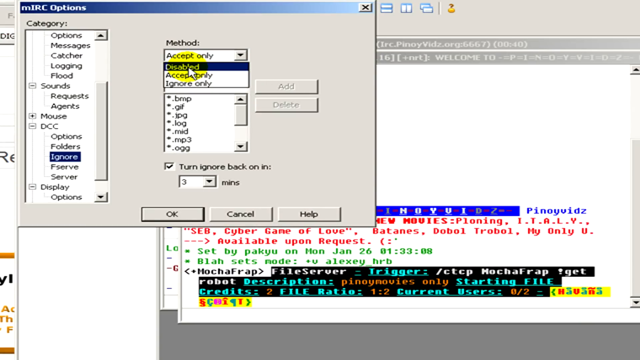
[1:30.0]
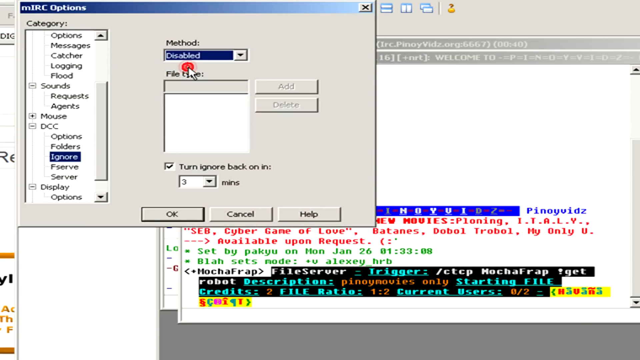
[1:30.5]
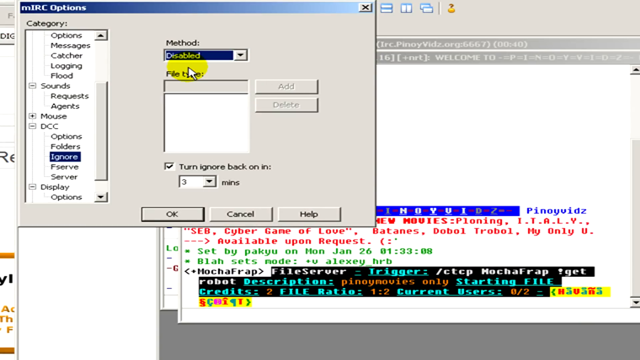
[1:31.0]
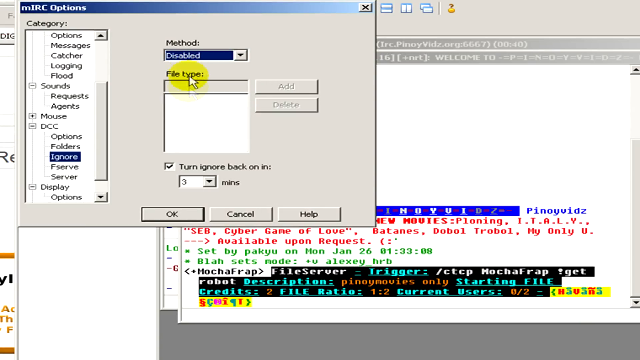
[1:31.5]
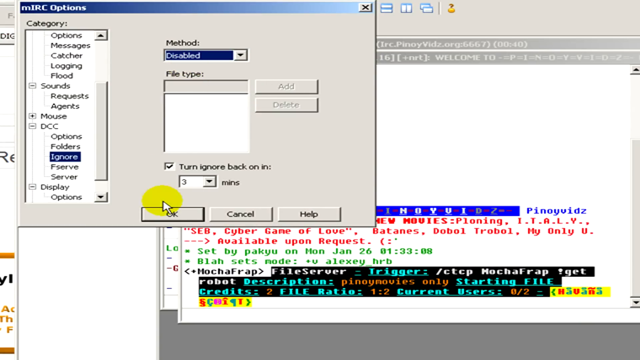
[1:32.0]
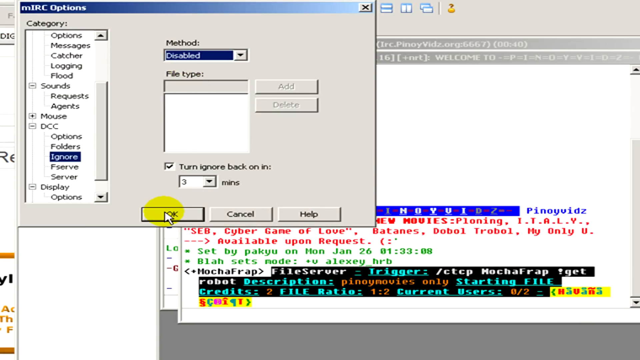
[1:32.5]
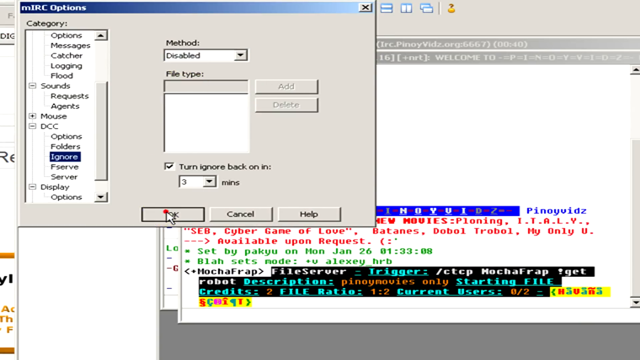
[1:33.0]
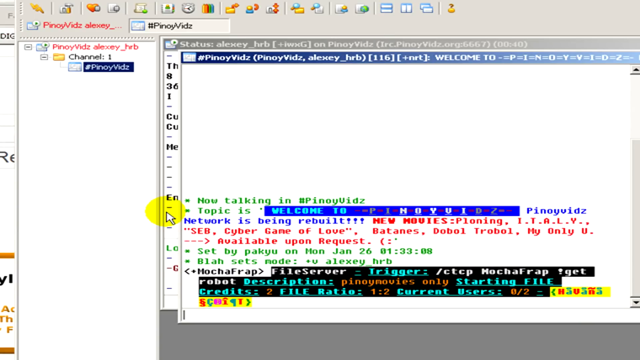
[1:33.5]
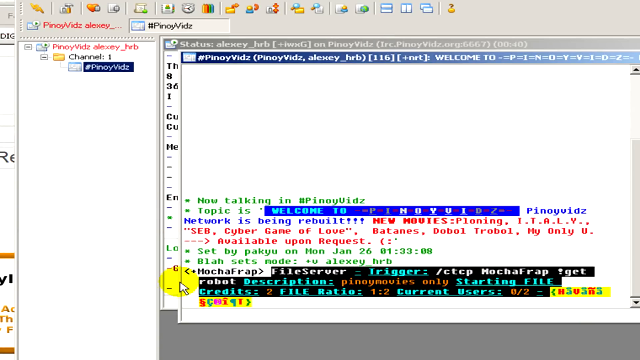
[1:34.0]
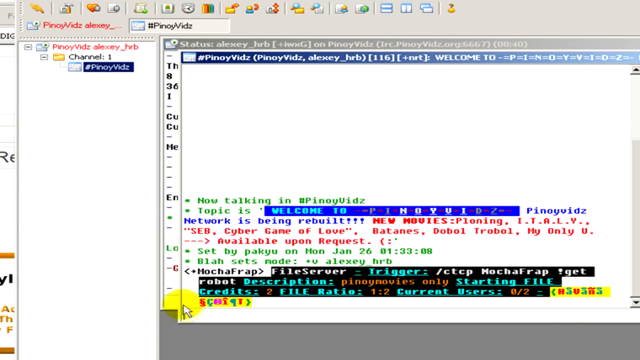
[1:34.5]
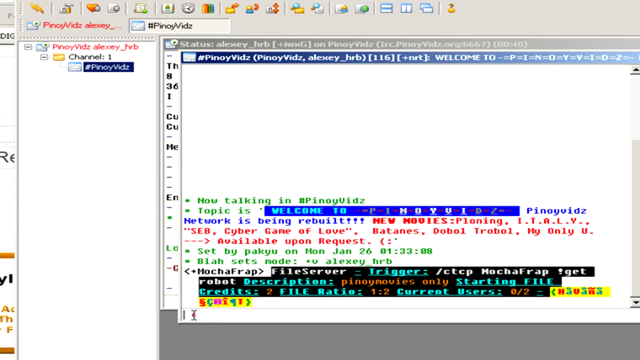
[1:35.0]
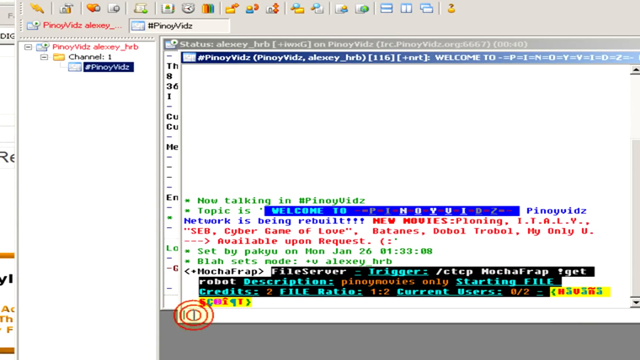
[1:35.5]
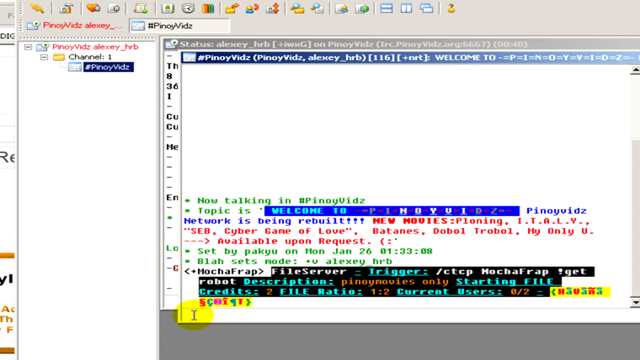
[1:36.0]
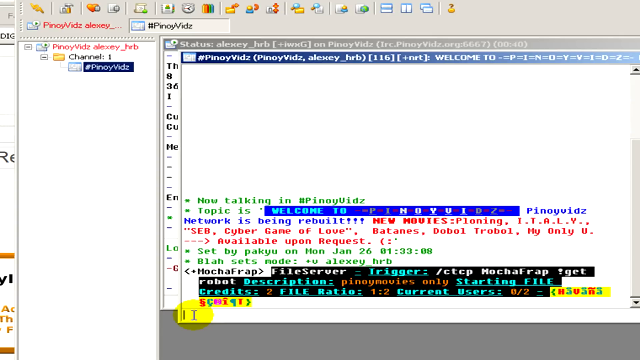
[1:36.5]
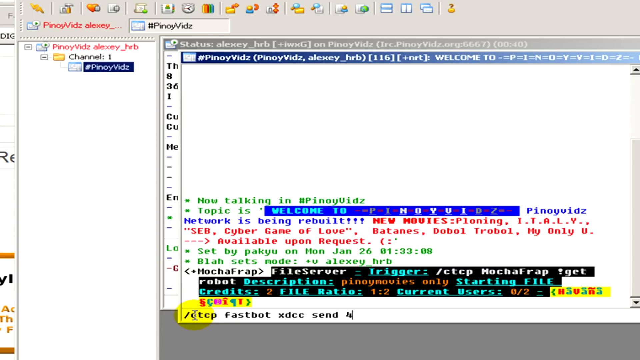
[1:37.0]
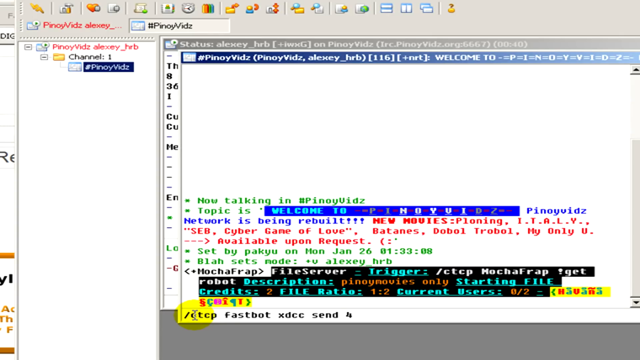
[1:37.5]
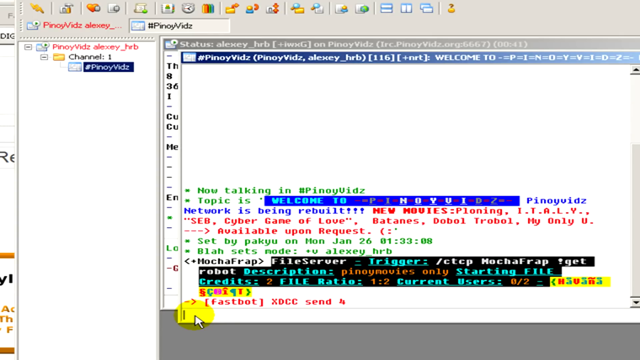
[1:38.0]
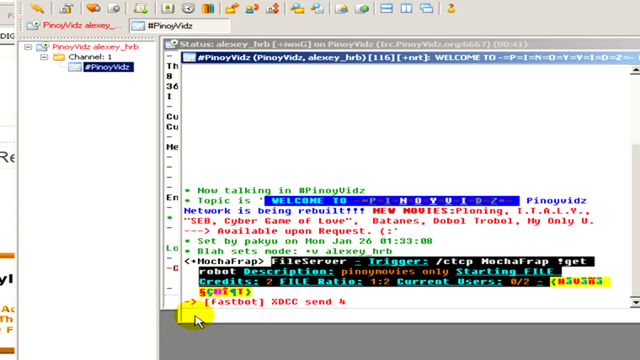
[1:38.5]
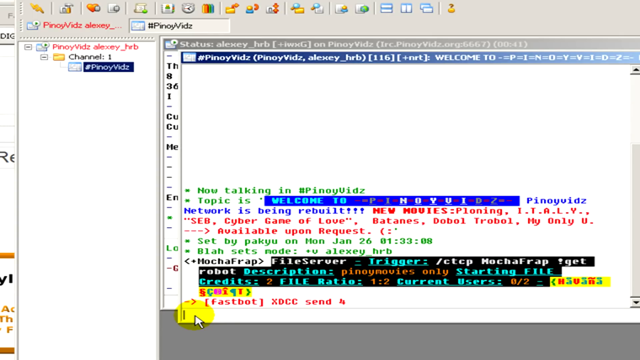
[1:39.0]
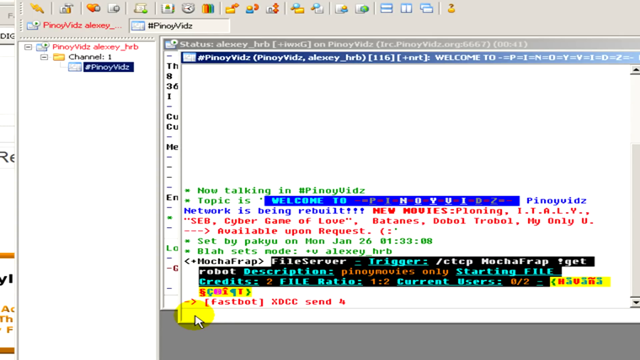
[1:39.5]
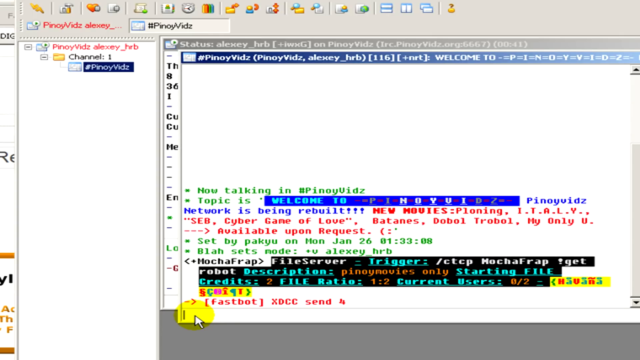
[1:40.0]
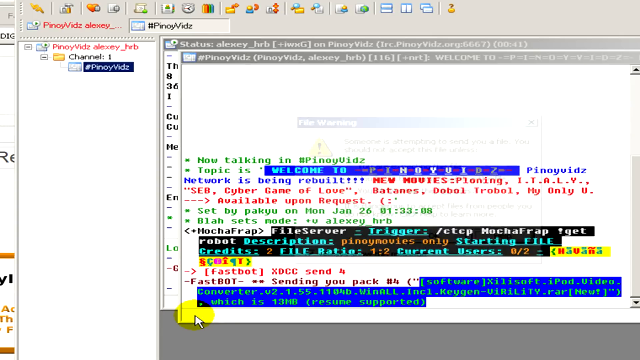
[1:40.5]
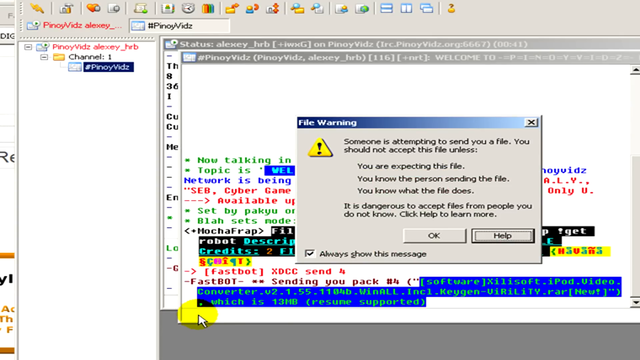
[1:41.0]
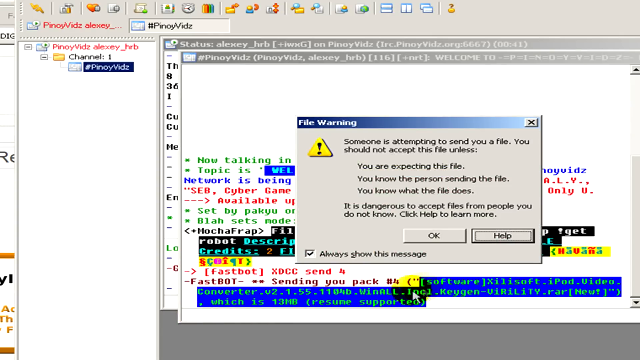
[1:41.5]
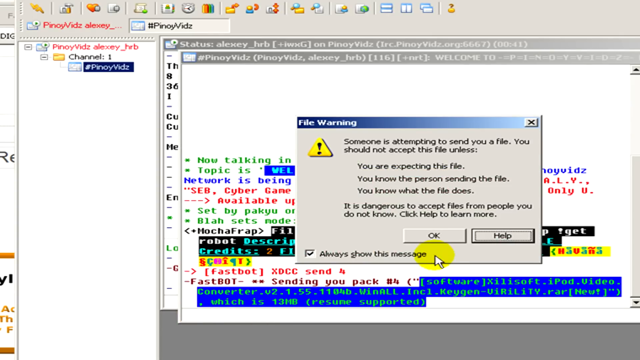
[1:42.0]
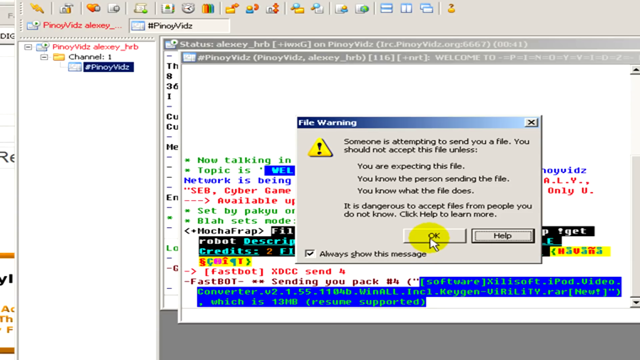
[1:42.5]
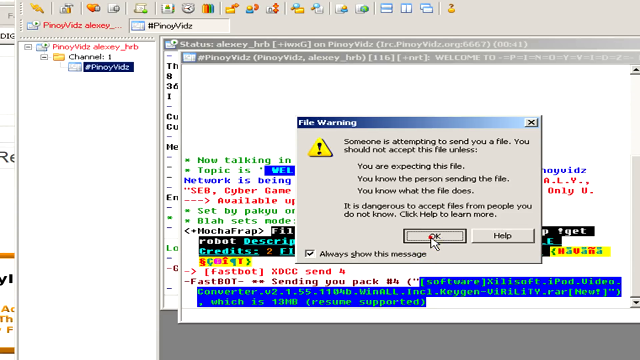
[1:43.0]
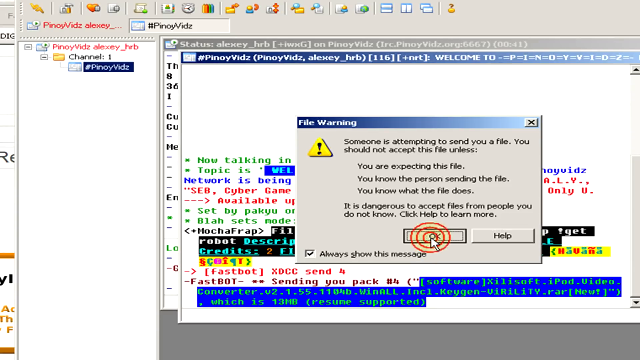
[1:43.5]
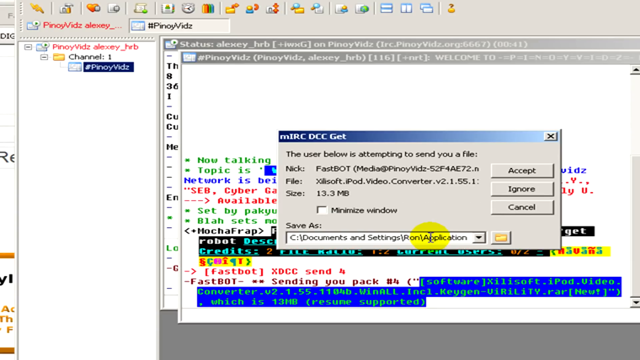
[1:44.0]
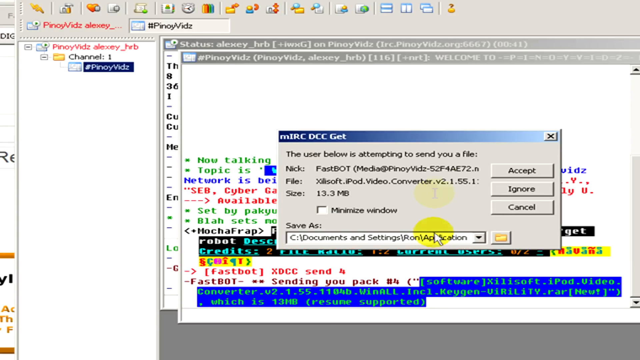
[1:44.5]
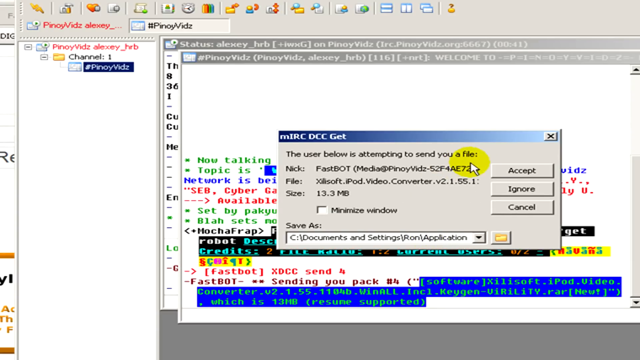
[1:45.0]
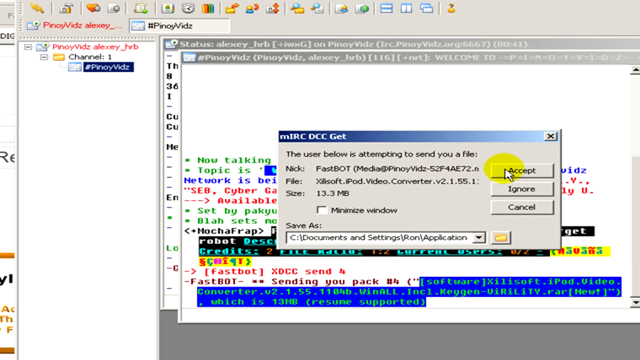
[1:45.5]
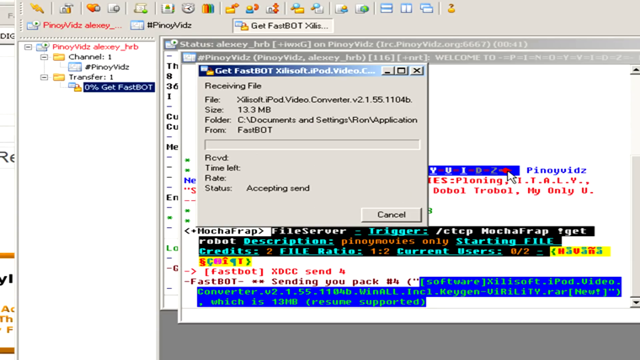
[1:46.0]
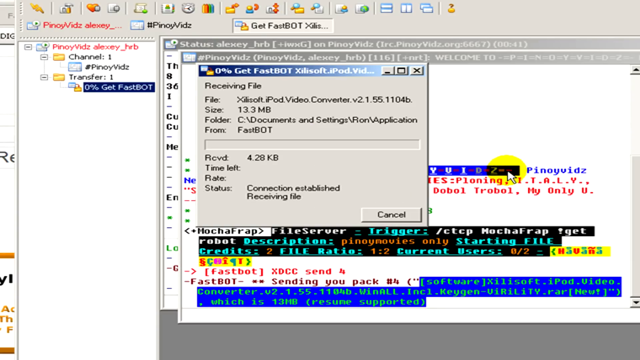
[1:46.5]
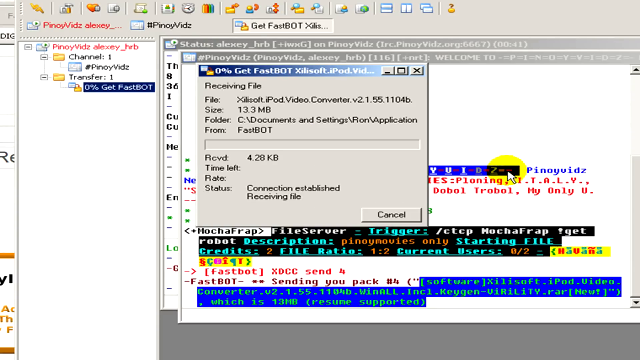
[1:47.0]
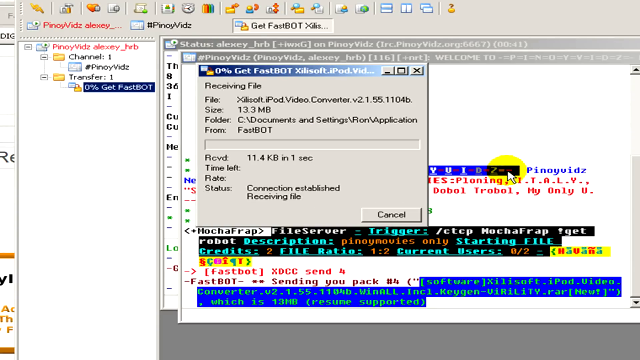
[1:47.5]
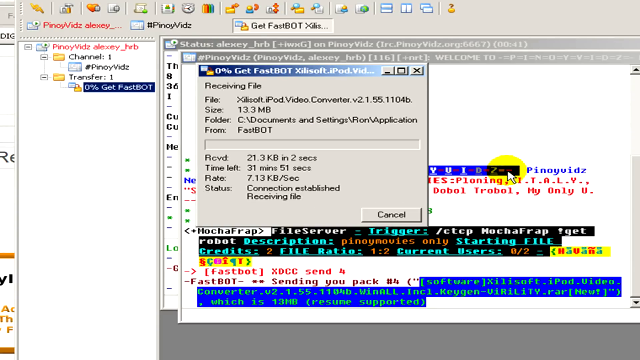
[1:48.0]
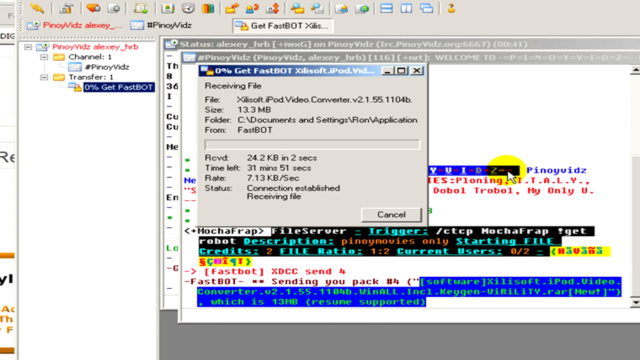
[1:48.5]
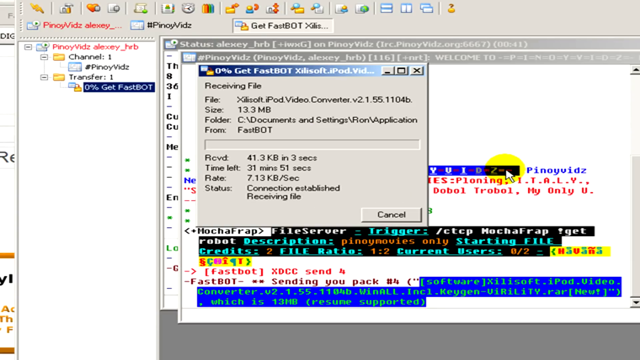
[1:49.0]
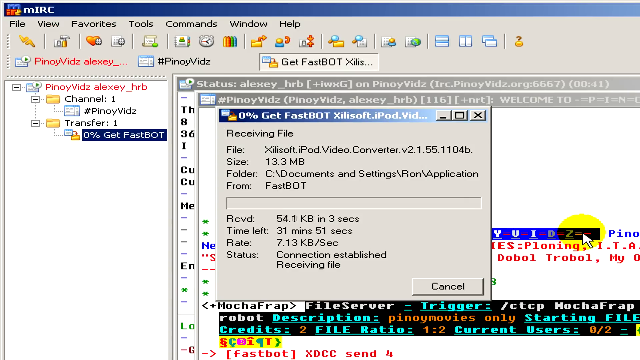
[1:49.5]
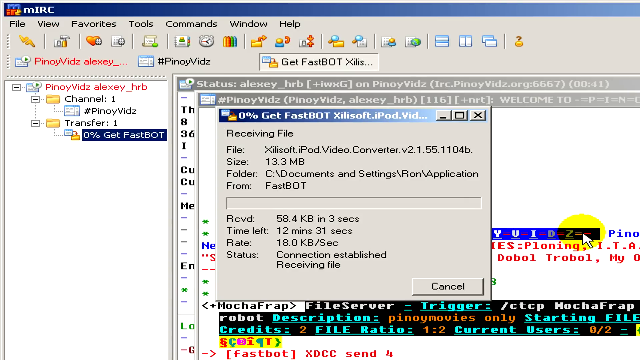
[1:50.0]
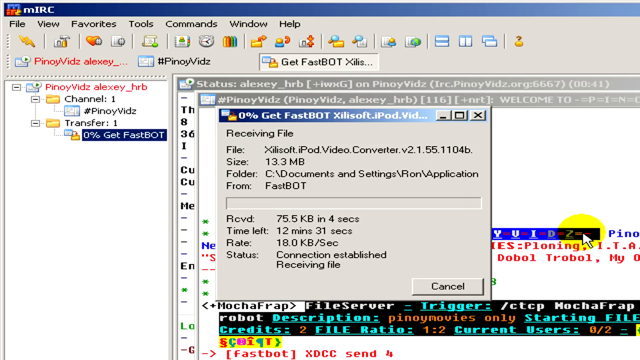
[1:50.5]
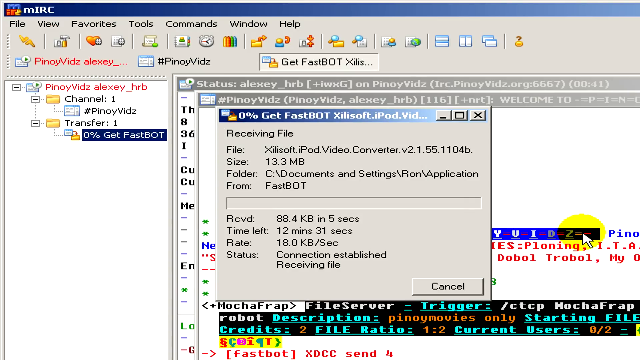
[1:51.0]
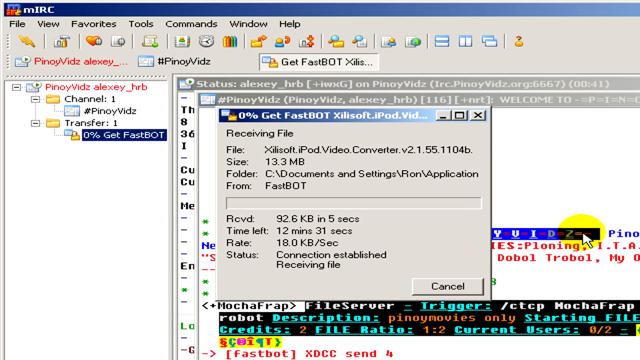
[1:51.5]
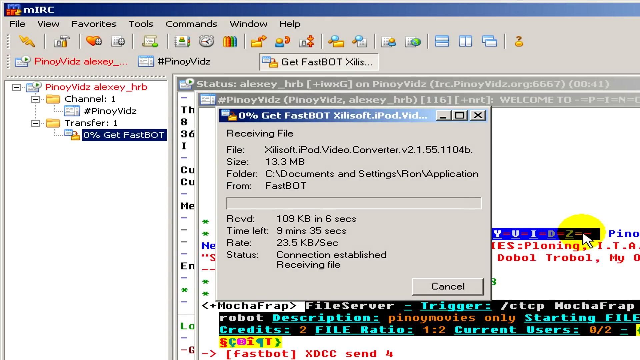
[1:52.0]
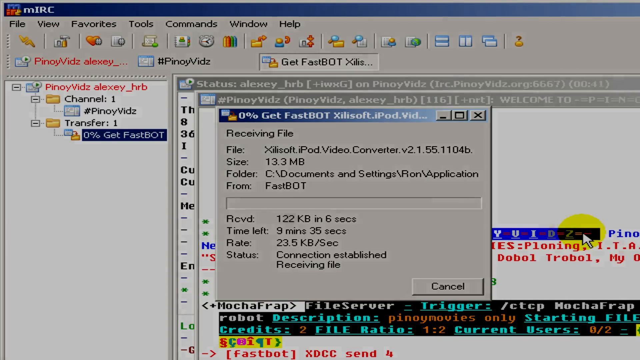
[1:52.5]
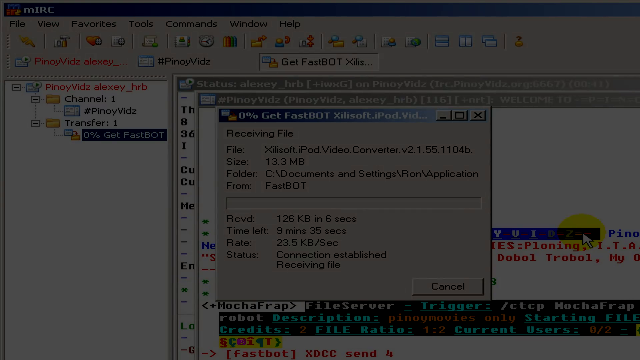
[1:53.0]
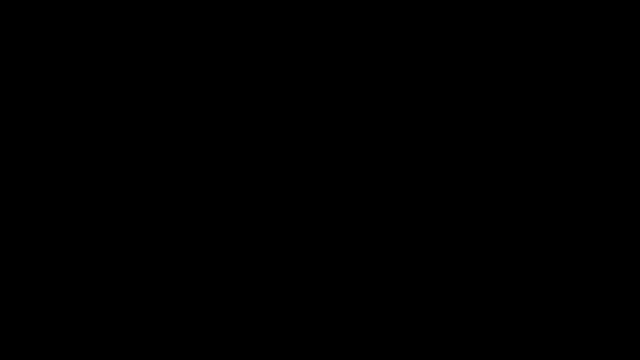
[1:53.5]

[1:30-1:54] An mIRC options dialog box is open, with the yellow cursor hovering above the file type option; it moves over the method box and disables it before clicking OK. Next comes a page of code in different colors, some green, purple and red, some highlighted in a very dark or bright blue, and some highlighted in black with a sort of green font. The yellow highlighted cursor enters "fastbot xdcc send 4", which appears in red. A file warning box appears and the cursor clicks OK. An mIRC DCC get box then appears showing what looks like a nickname for the file, the file, and the file size; it is accepted and the file begins to download, showing the download speed and time left. The video ends before the download completes.